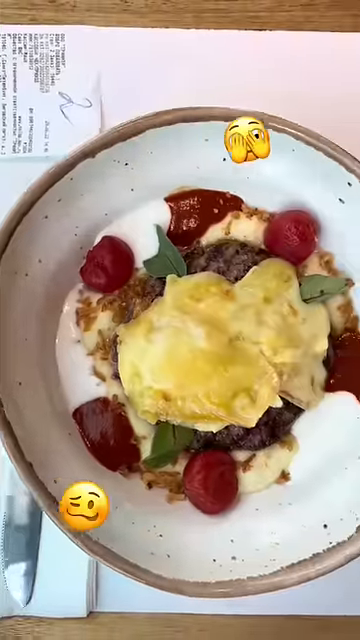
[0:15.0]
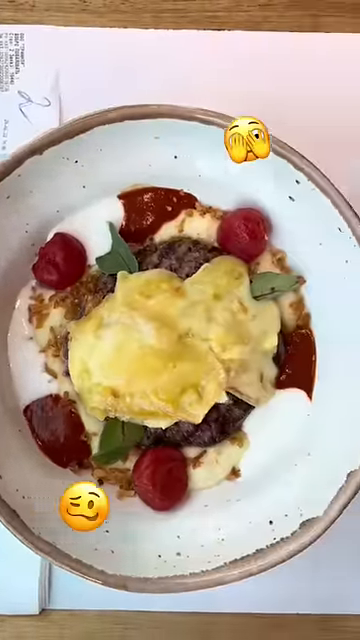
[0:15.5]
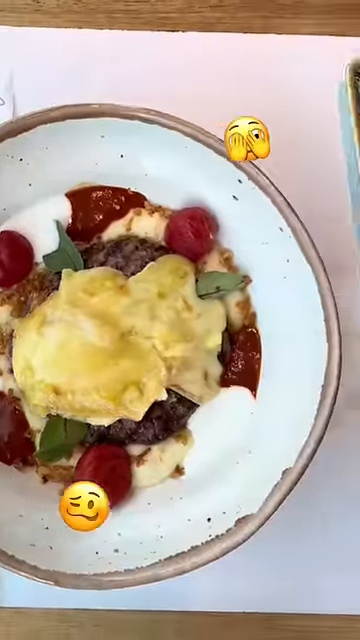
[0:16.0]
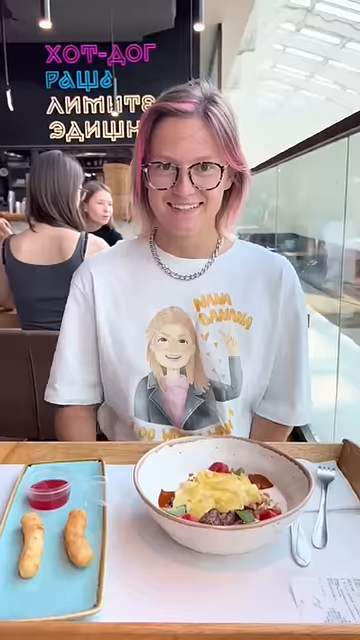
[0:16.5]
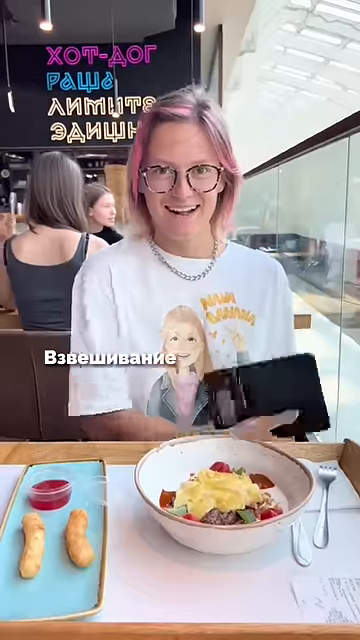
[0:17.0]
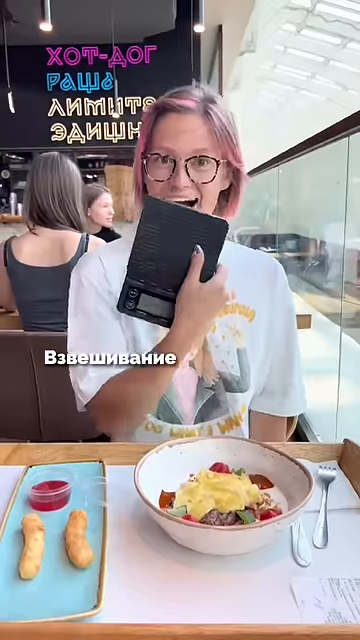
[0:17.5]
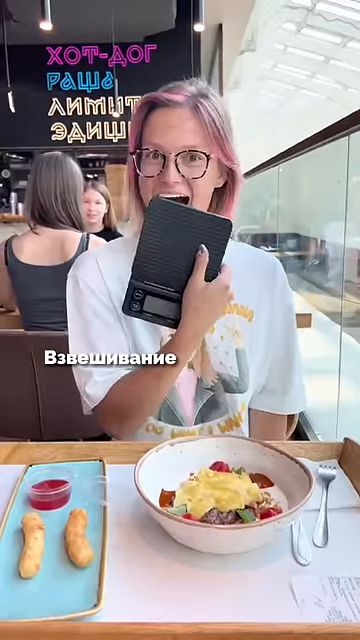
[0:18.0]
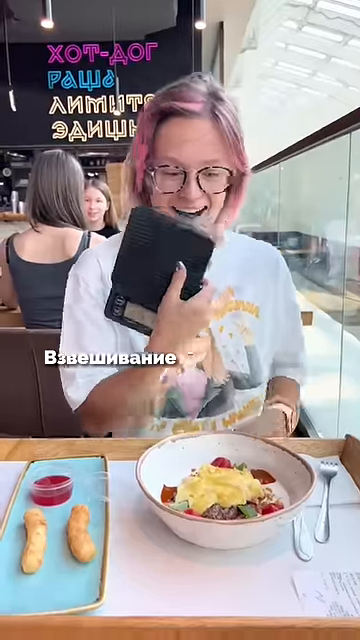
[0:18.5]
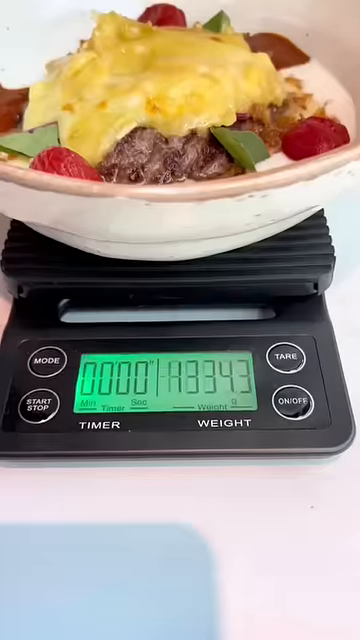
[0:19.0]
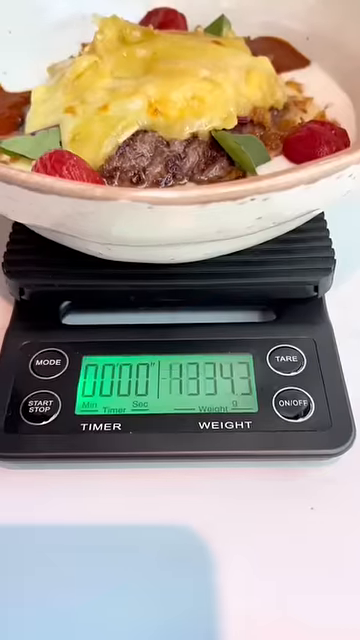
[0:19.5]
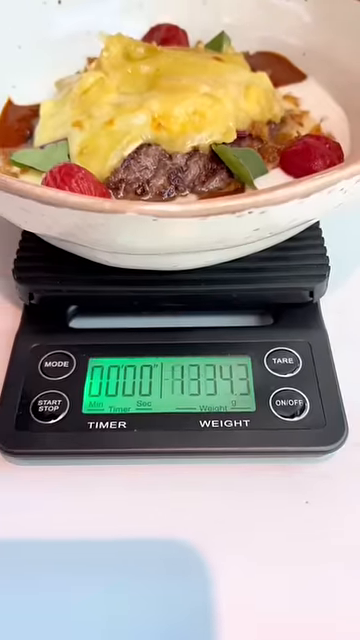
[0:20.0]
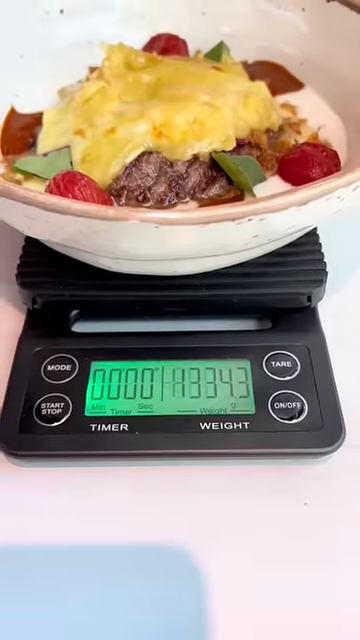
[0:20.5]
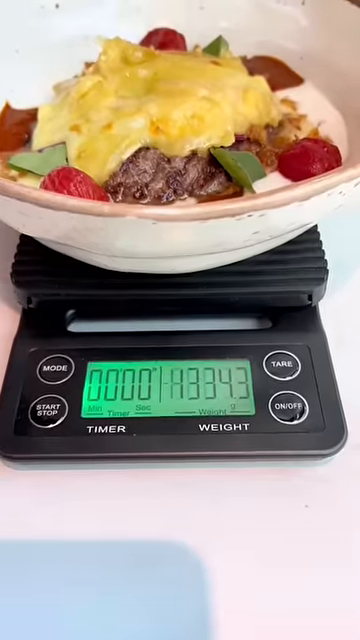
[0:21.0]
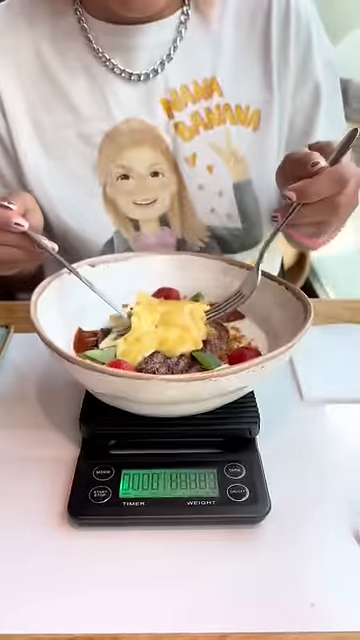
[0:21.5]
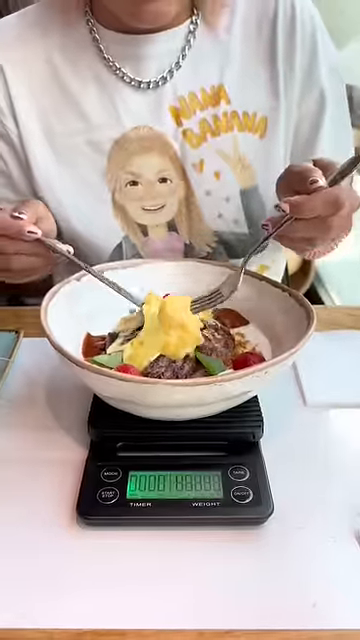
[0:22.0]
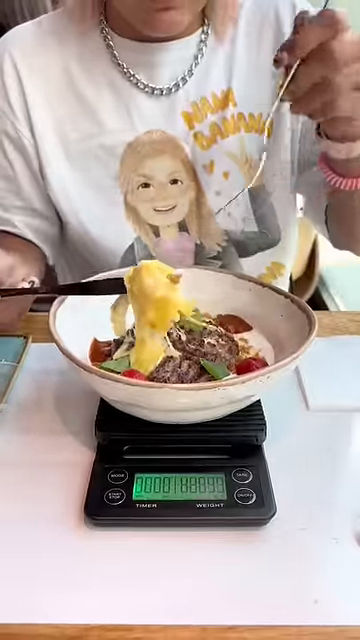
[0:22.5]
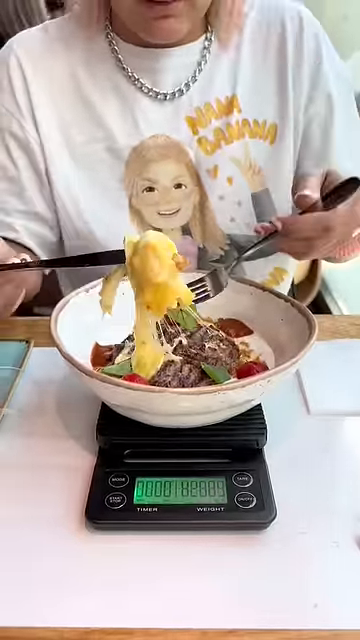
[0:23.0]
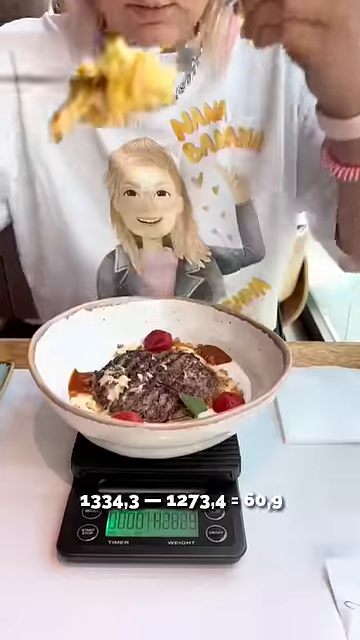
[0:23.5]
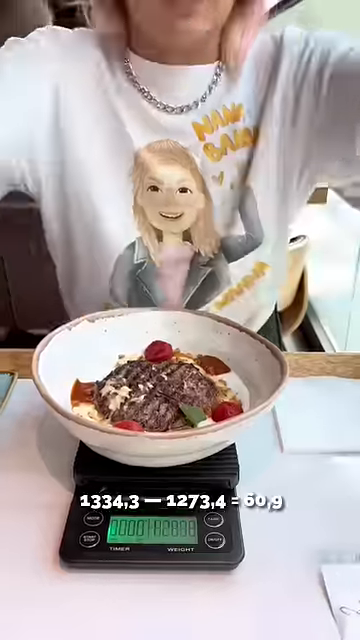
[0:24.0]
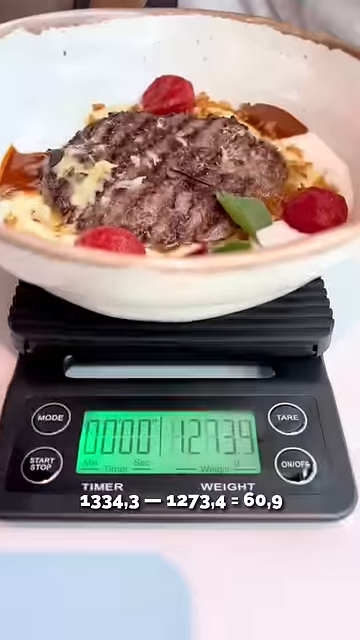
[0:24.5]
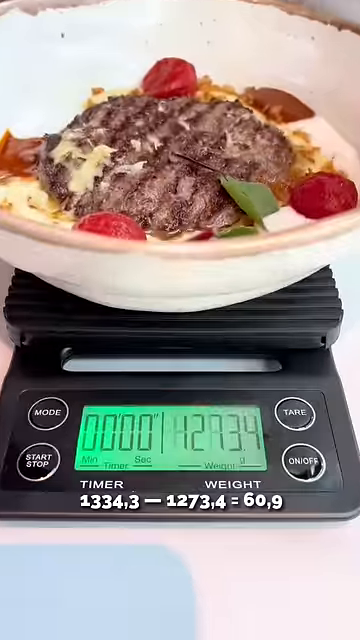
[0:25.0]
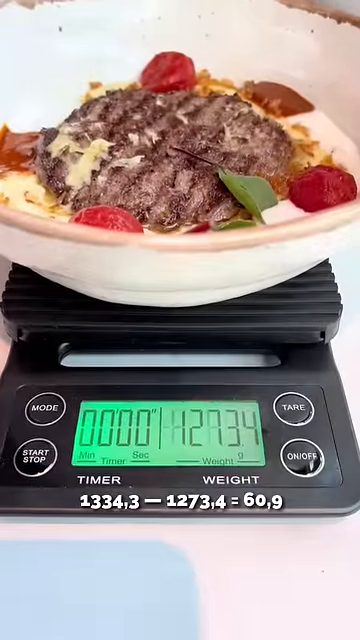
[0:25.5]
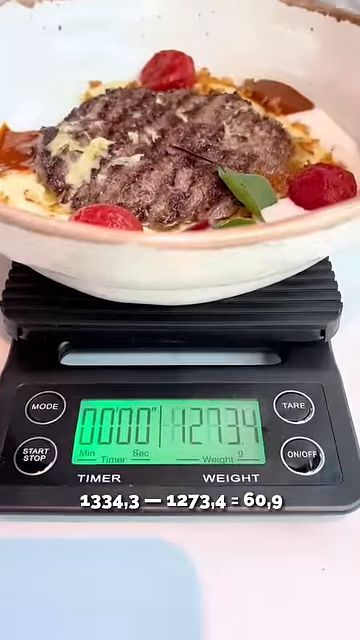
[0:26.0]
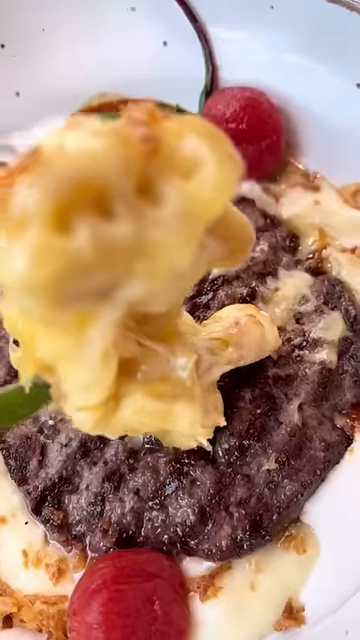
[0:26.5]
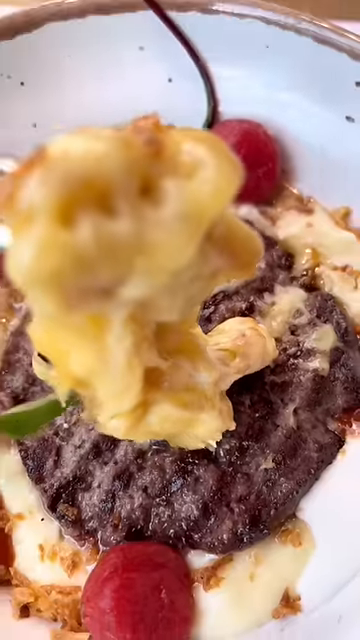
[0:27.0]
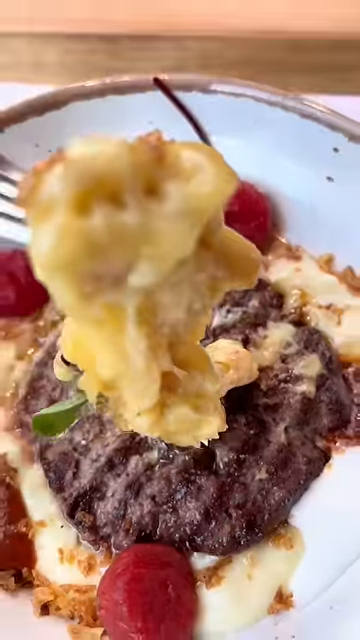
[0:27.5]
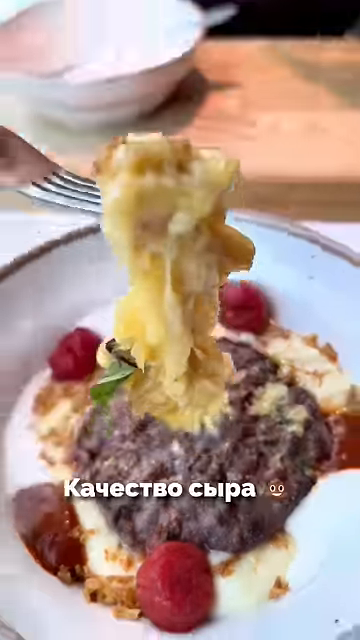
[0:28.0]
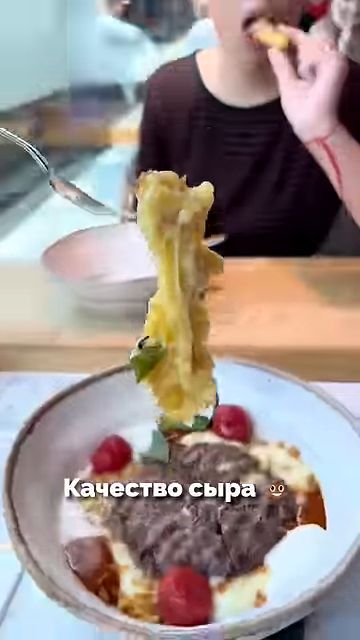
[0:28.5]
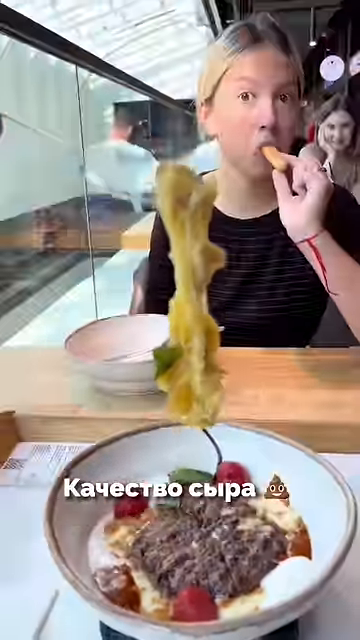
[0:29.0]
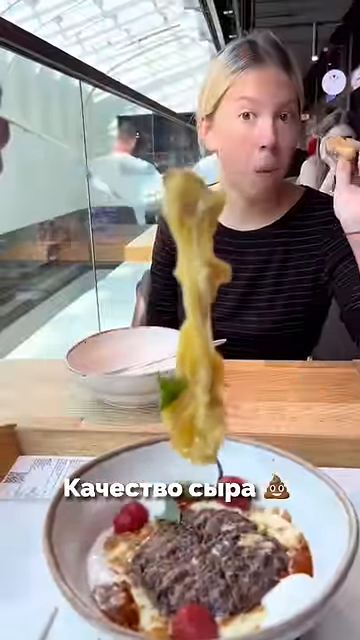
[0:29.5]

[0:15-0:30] Various food items, including some fruit, are in a bowl. The bowl is placed on an electronic scale whose numbers indicate how heavy the food is. Mozzarella sticks with dip are off to the side of the bowl. Another girl, with pink hair, is sitting across, also enjoying eating out. A fork and knife dip into the bowl and lift food up; the main item lifted is a piece of cheese, likely grated off a block of cheese. The food scale's measurements are written across the bottom.